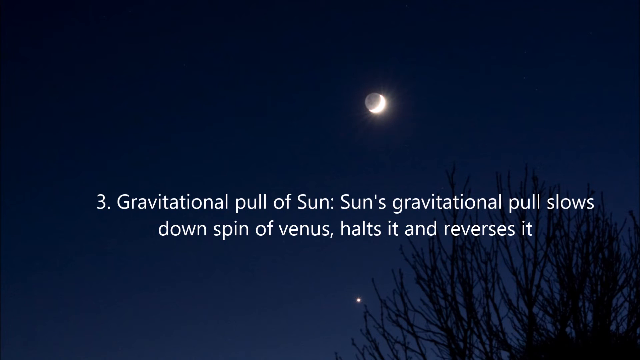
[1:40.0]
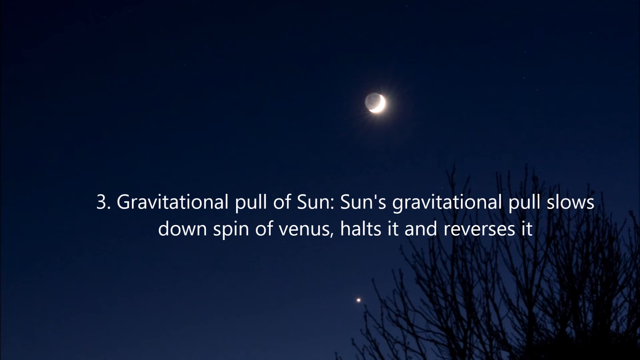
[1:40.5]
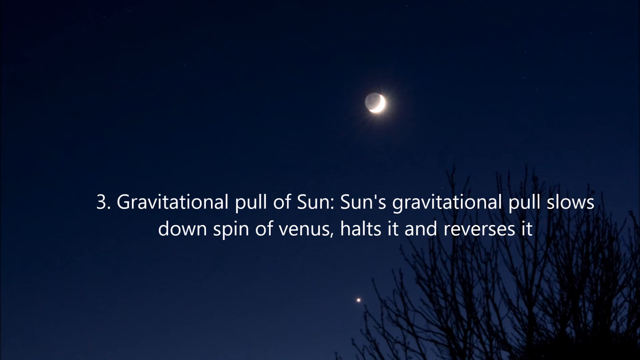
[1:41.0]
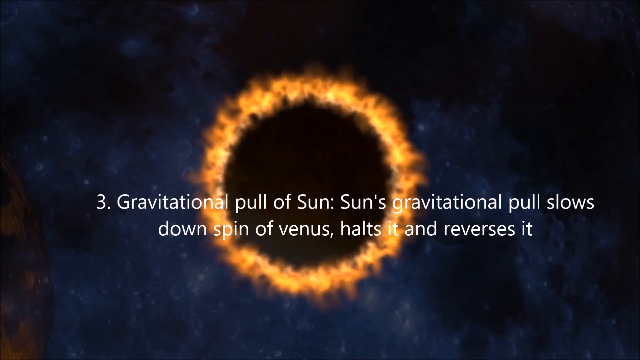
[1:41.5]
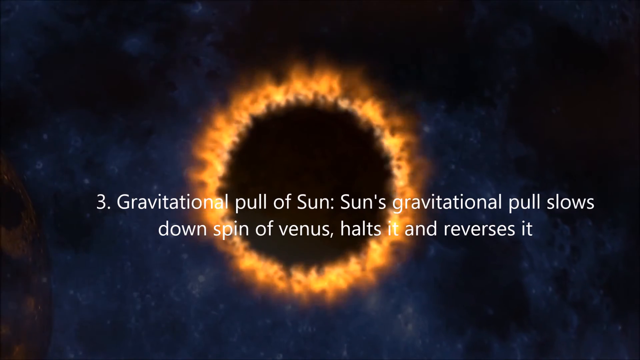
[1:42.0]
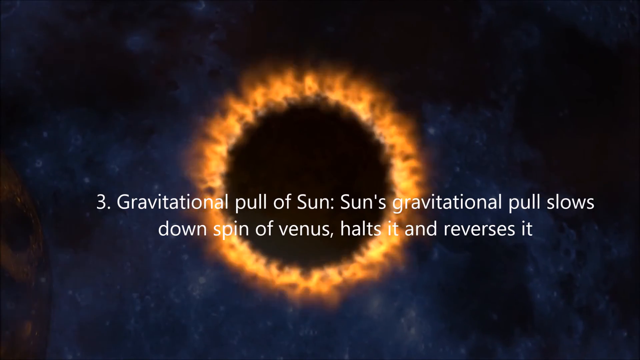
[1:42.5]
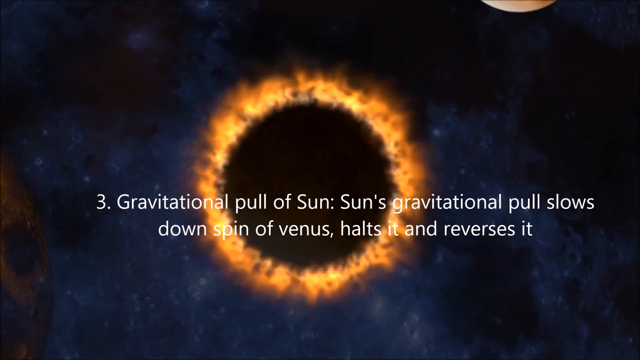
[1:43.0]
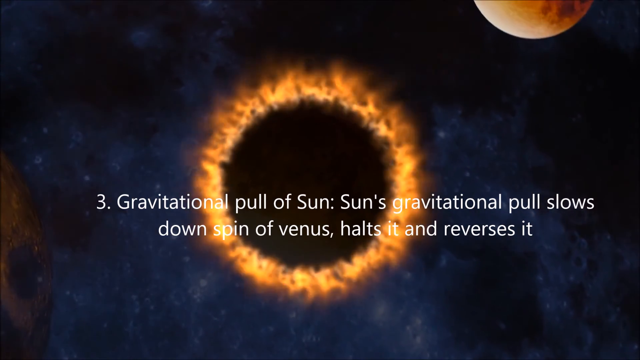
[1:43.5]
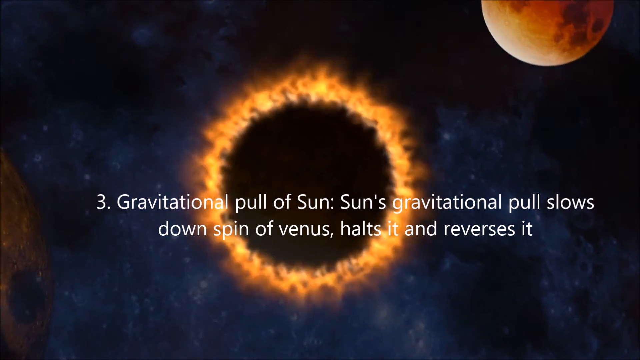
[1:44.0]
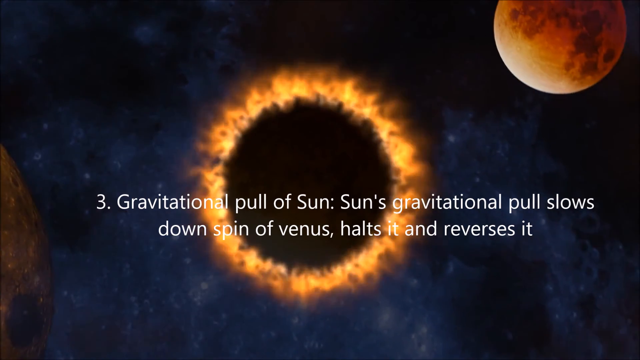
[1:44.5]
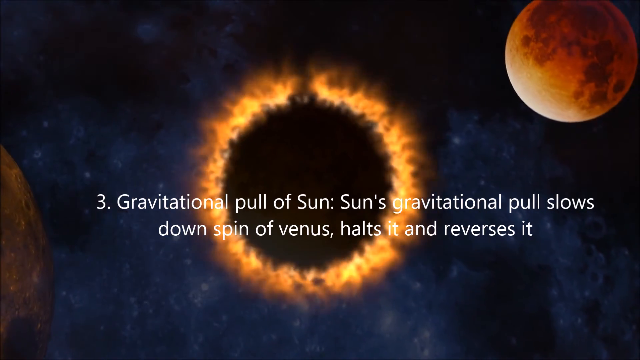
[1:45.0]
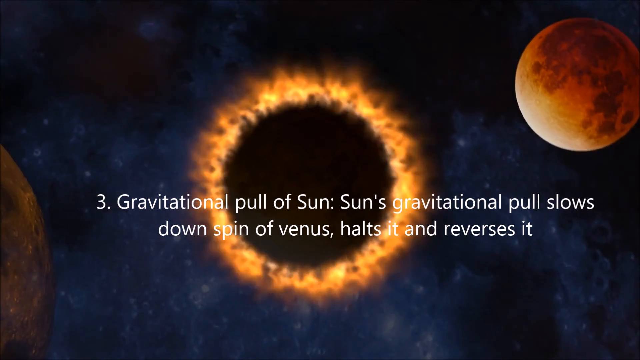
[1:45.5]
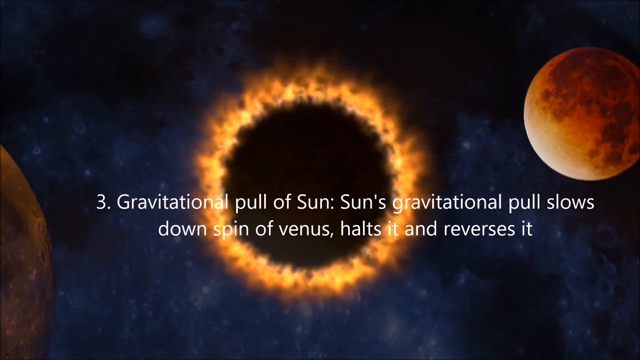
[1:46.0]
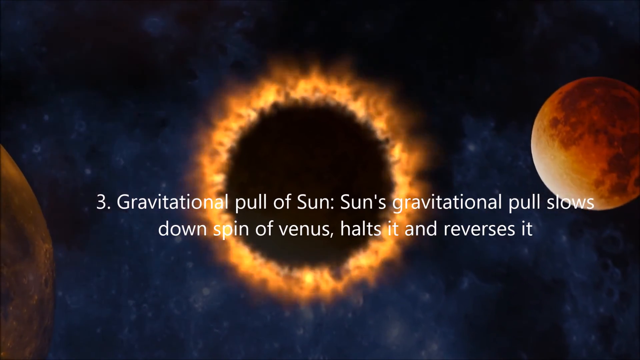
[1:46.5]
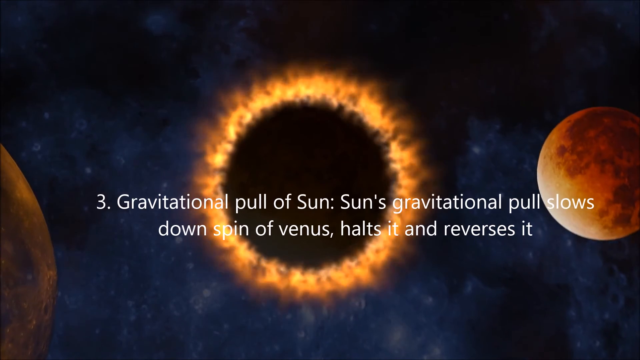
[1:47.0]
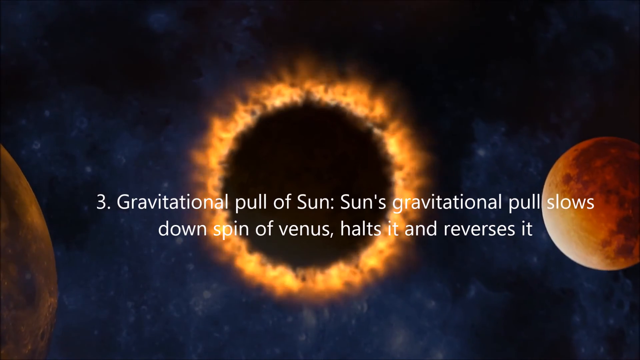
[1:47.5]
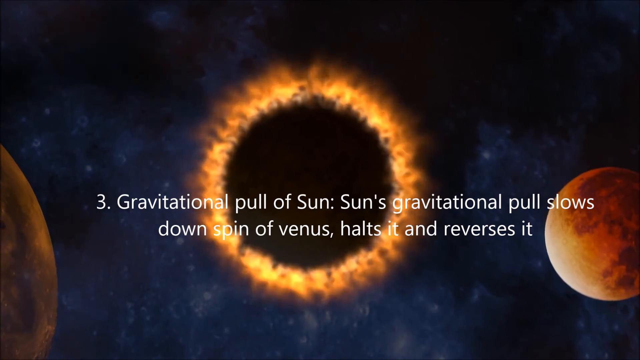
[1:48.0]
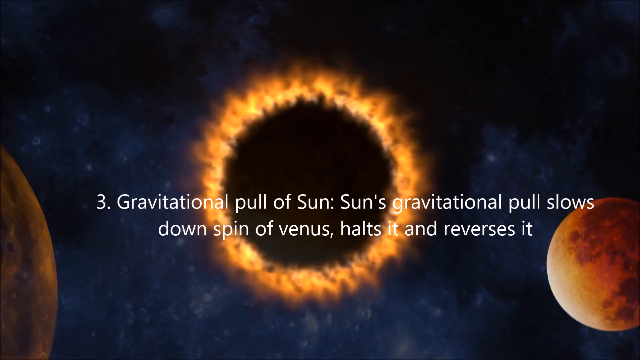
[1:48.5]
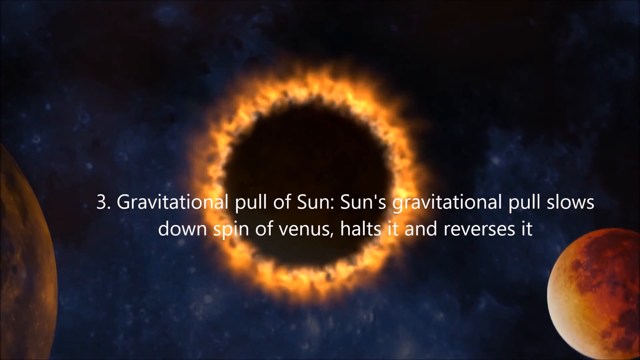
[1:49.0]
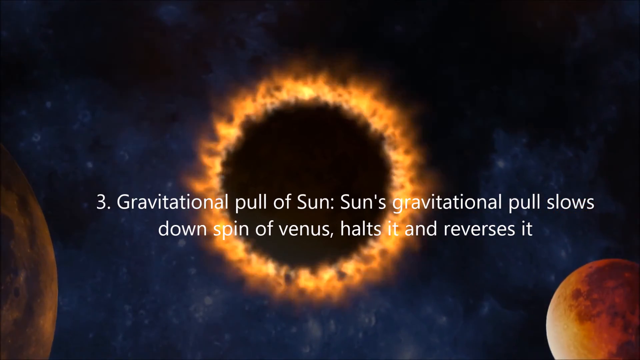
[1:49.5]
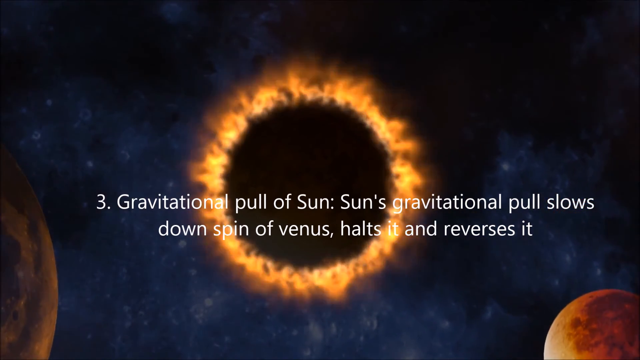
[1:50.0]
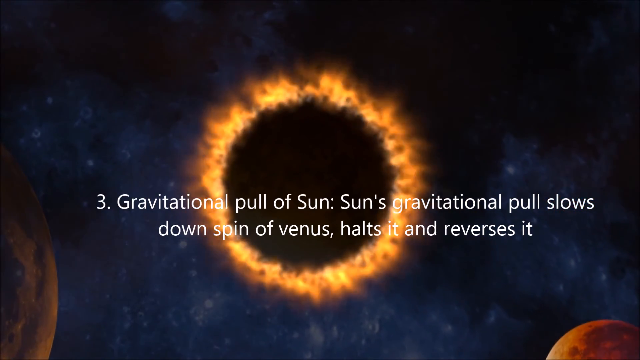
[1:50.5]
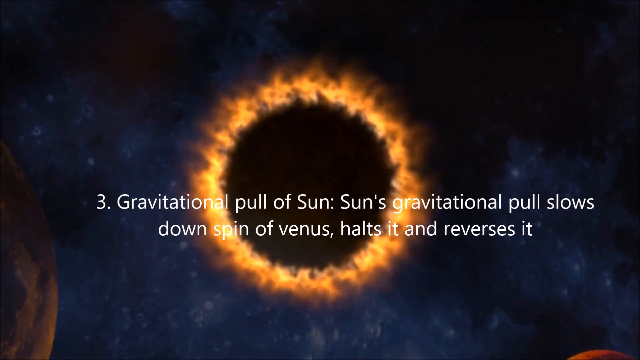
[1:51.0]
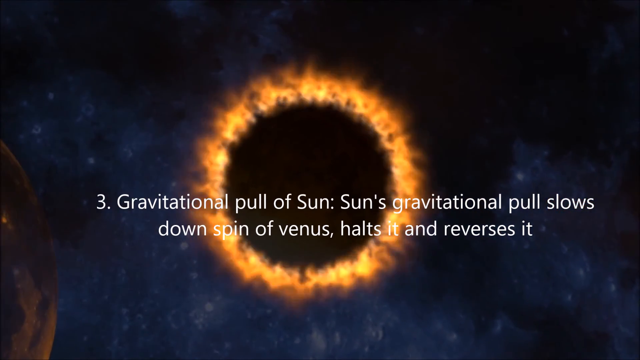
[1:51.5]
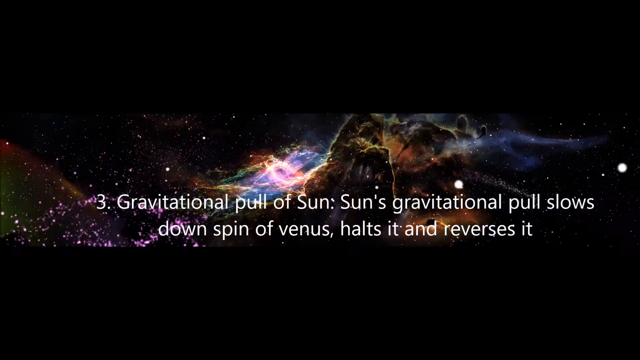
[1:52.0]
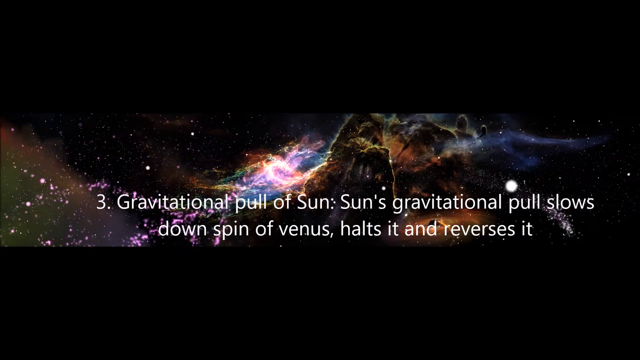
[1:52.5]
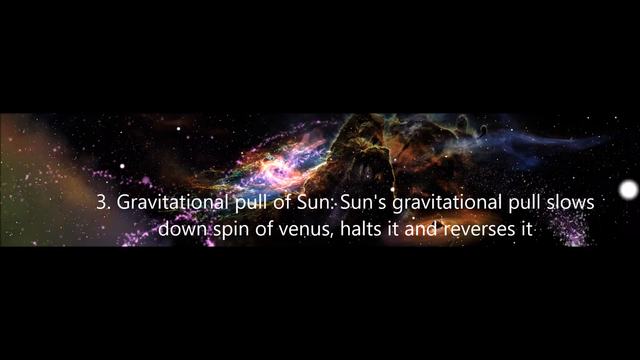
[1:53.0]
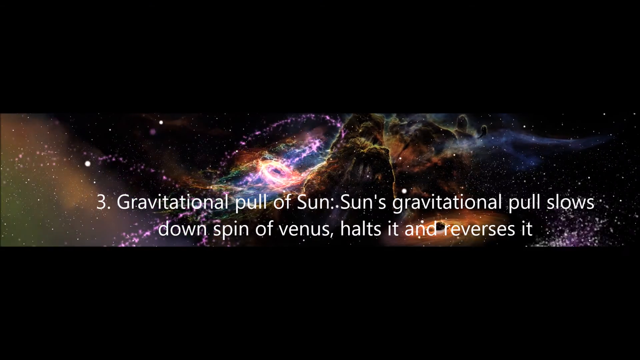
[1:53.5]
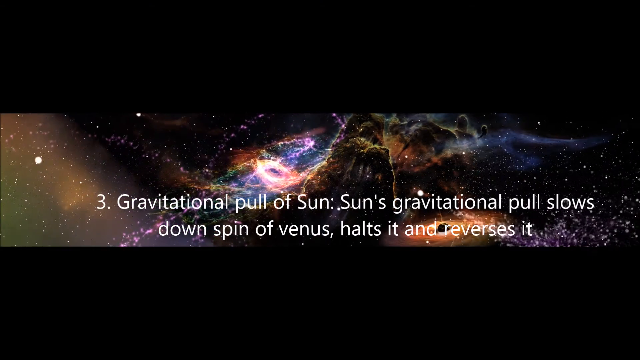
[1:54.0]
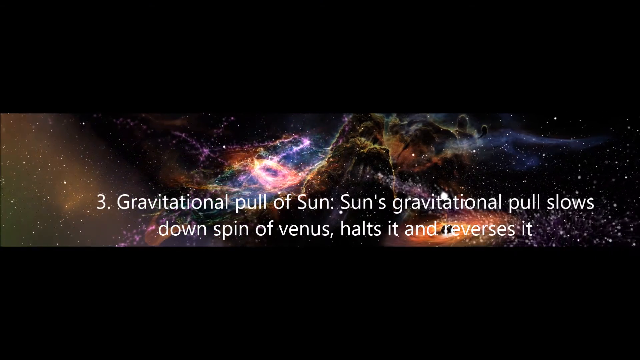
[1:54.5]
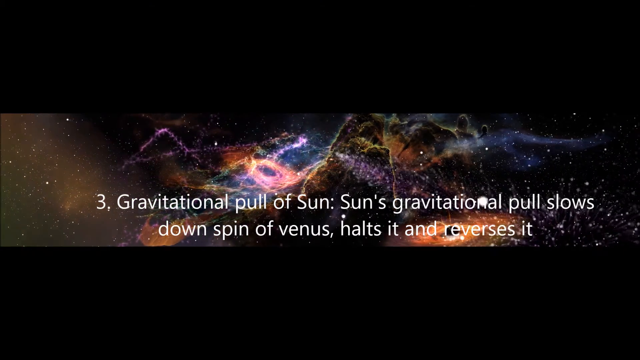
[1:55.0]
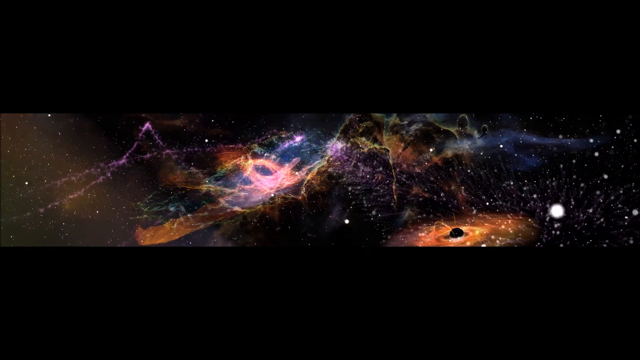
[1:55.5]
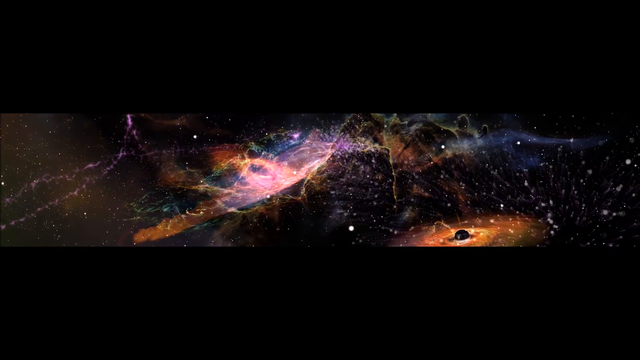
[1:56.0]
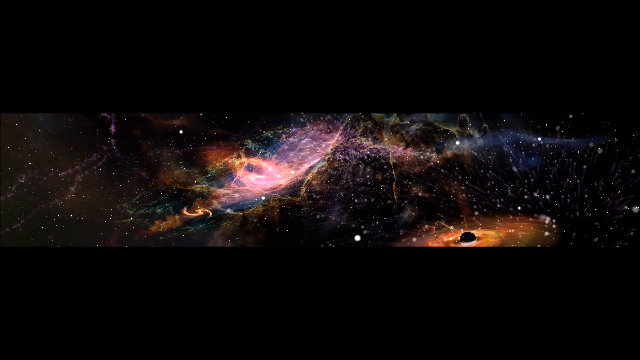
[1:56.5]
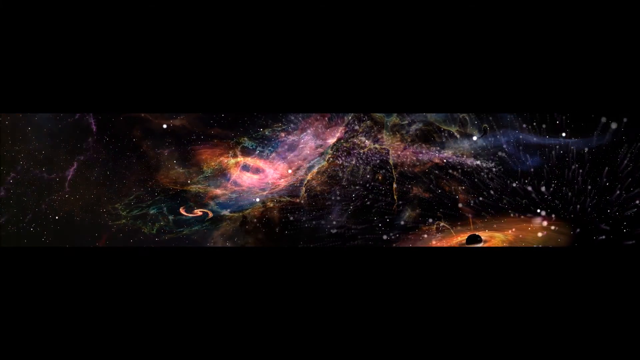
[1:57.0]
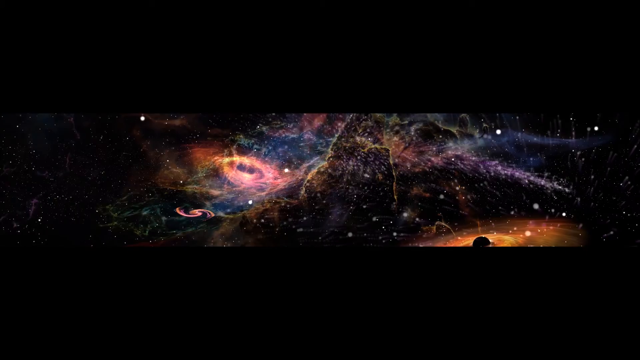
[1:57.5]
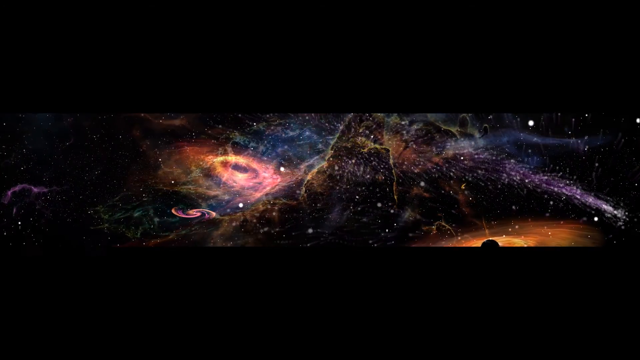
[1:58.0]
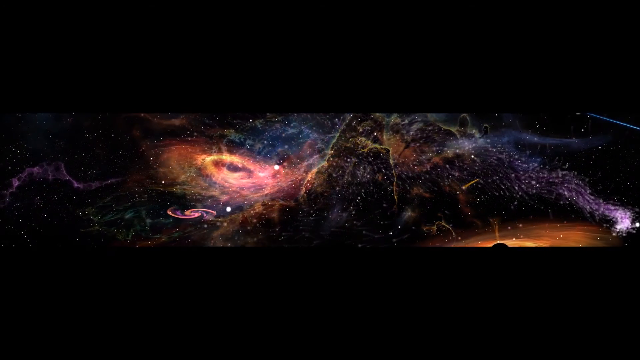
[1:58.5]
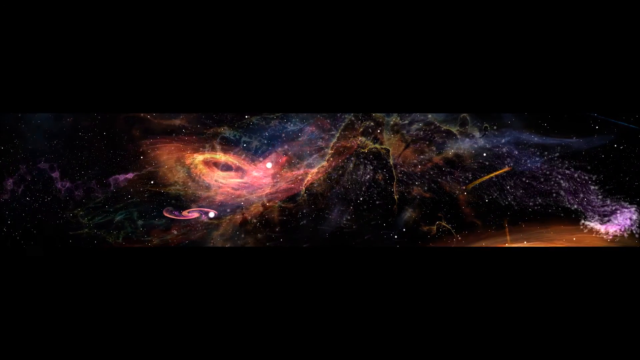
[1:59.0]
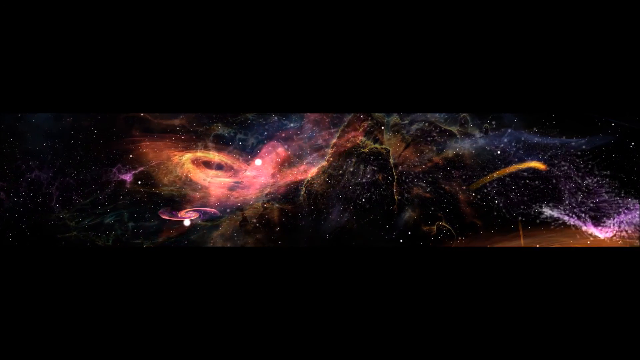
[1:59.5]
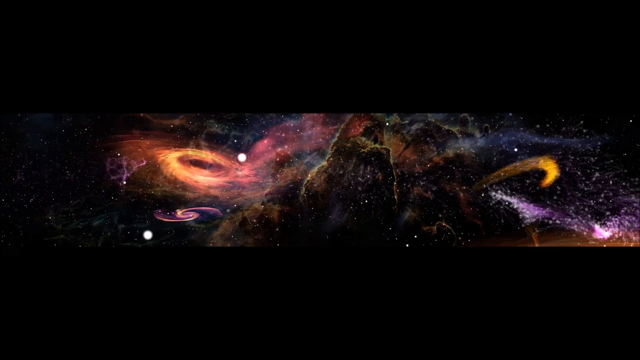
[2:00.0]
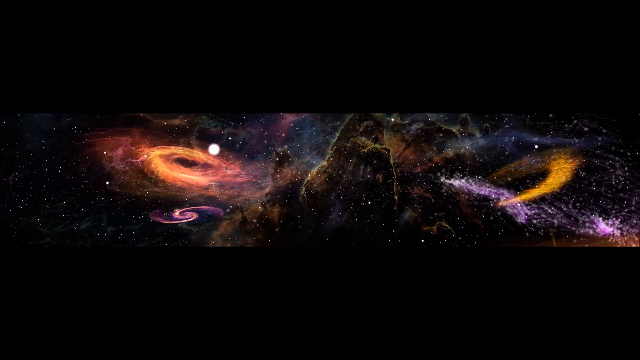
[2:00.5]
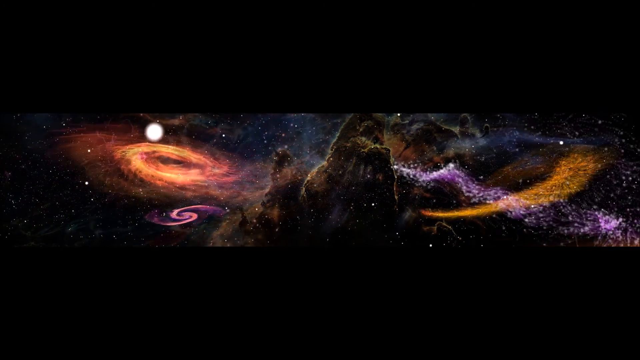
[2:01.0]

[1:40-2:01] The screen with the words "three gravitational pull of sun, sun's gravitational pull slows down spin of Venus halts it and reverses it" remains, with an image of the sky in the background showing a half moon shape. It then transitions to a round object in the middle with orange flames coming out of it. A round orange object that looks to be a planet moves from the top to the bottom of the screen, and a partial planet is visible on the left side. Finally, a computer-generated image of what looks to be outer space shows a galaxy or milky way made of various colors, including green, yellow, purple, pink and blue, with several particles emitting from the screen, mostly white but some pink and blue.